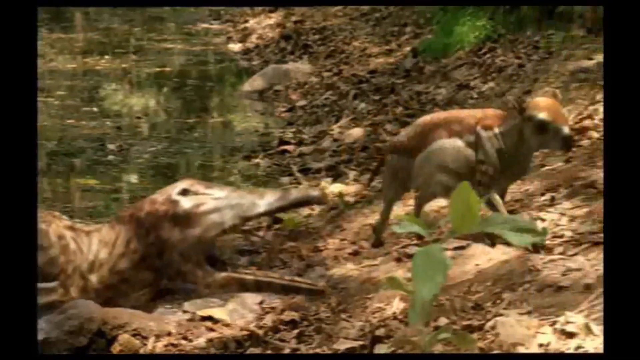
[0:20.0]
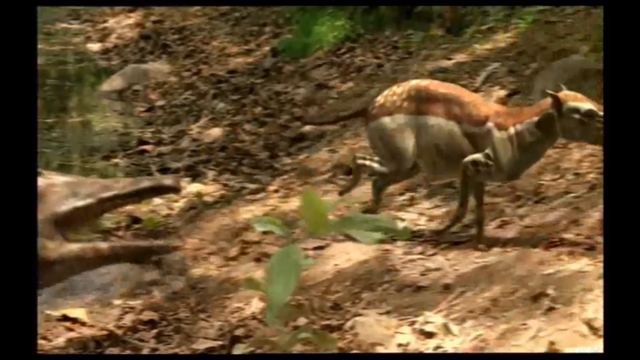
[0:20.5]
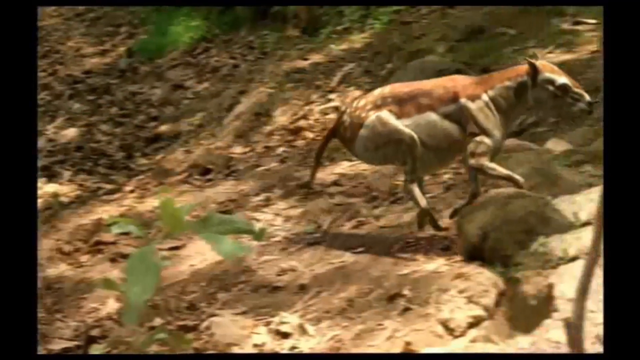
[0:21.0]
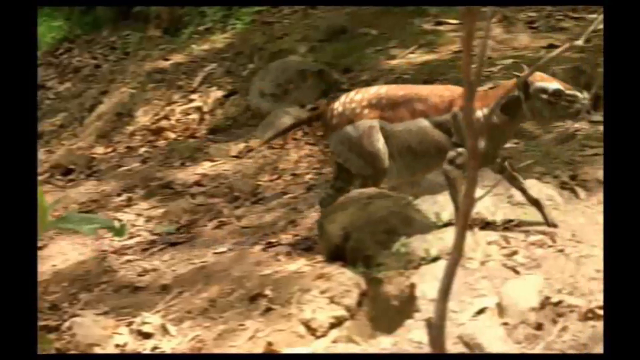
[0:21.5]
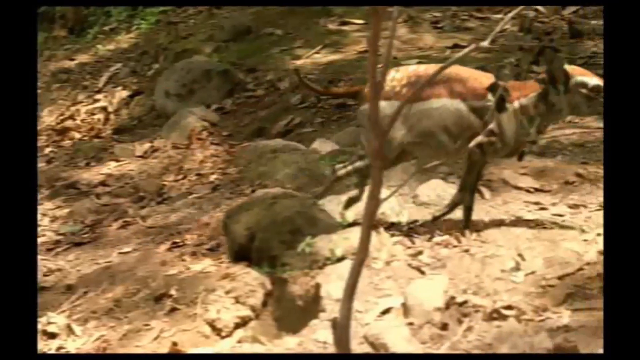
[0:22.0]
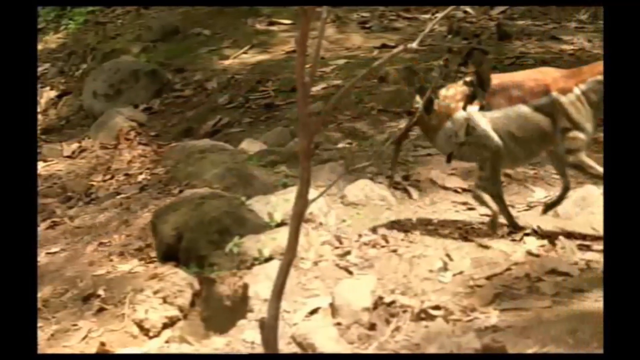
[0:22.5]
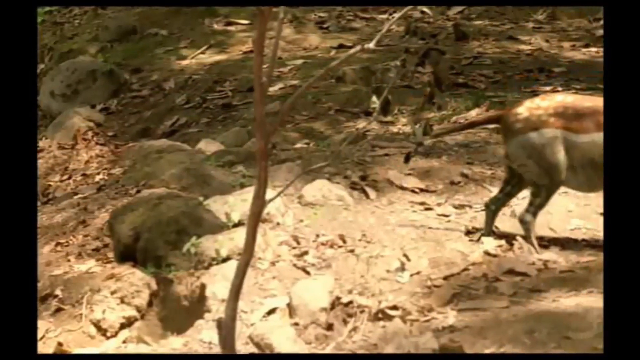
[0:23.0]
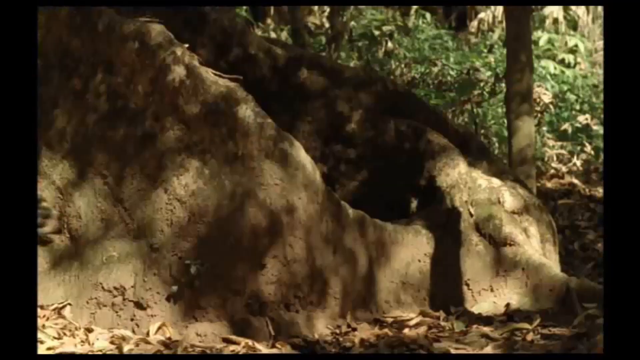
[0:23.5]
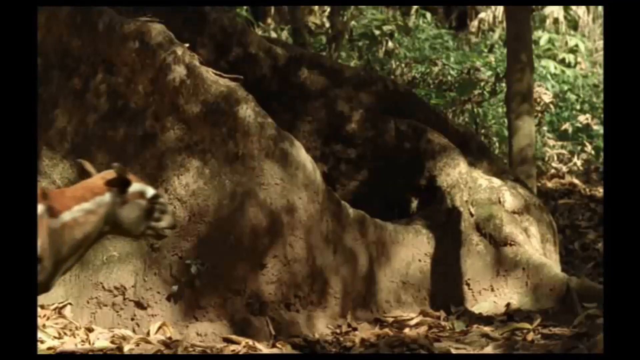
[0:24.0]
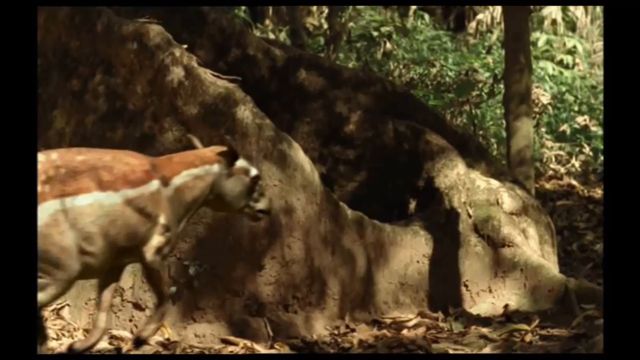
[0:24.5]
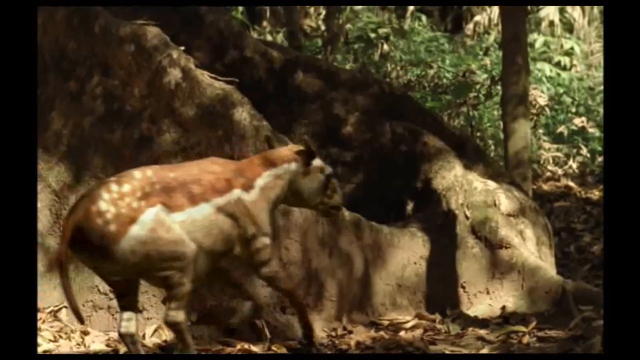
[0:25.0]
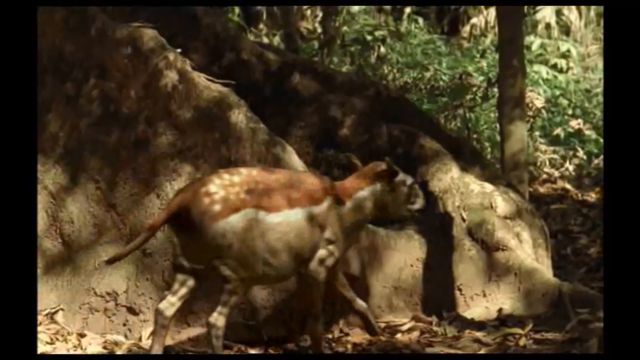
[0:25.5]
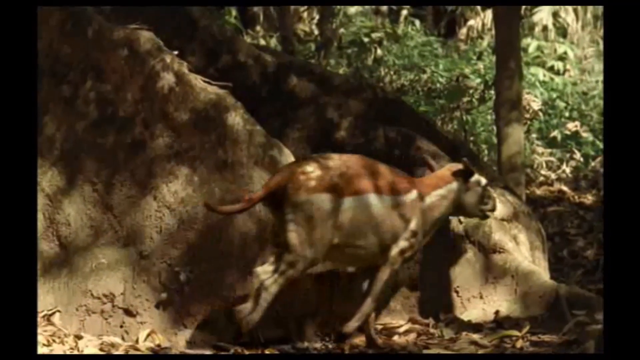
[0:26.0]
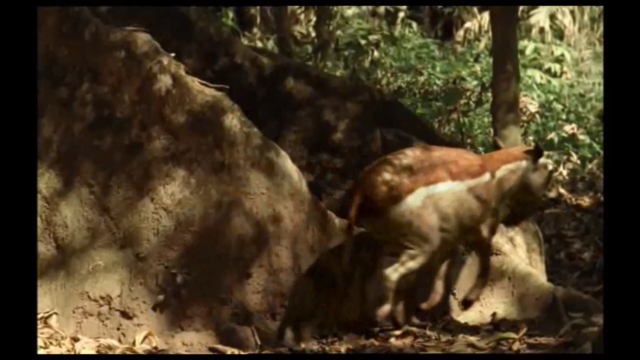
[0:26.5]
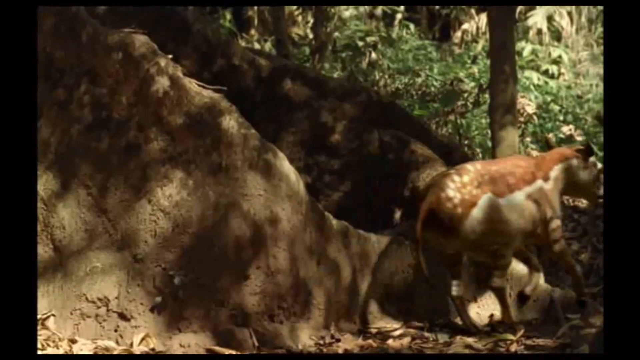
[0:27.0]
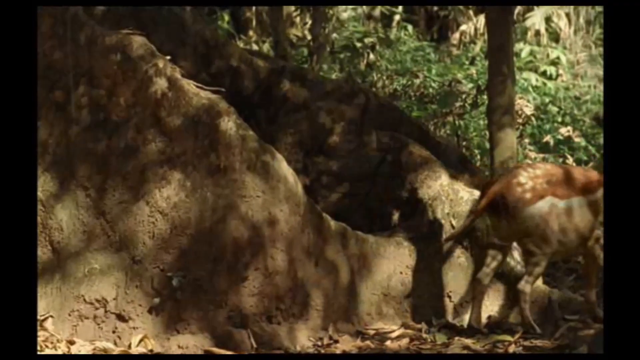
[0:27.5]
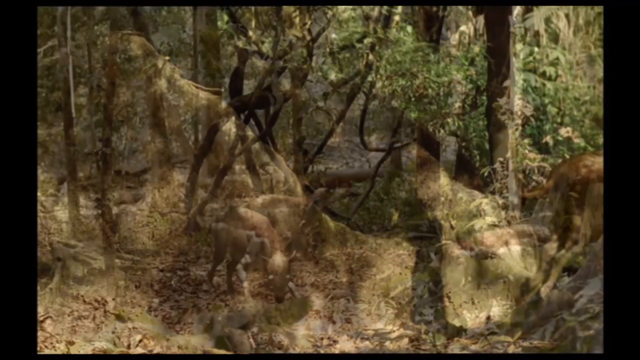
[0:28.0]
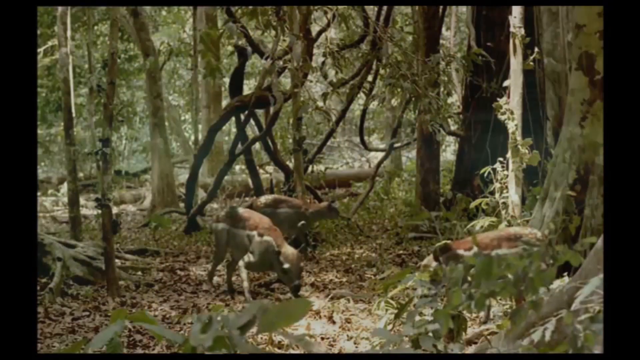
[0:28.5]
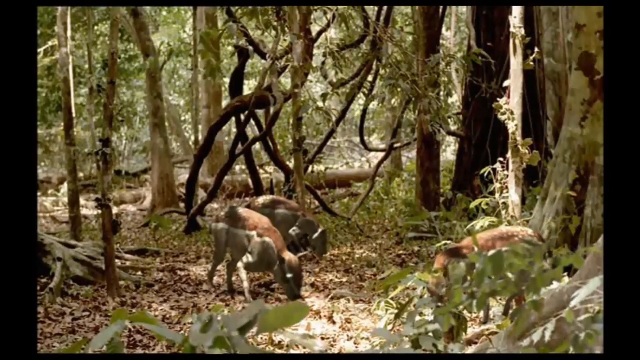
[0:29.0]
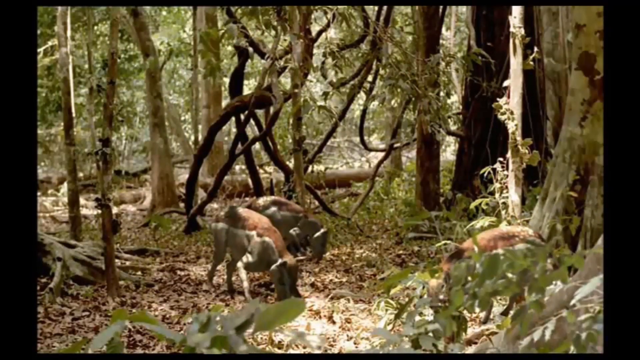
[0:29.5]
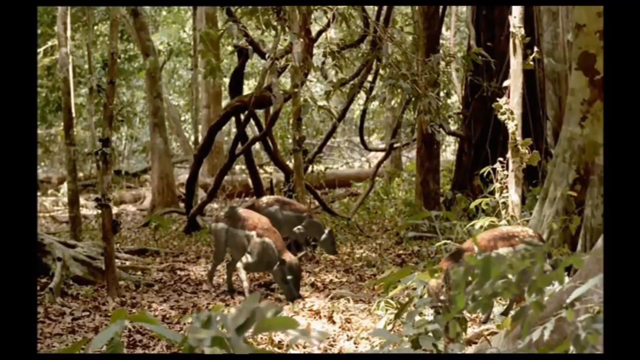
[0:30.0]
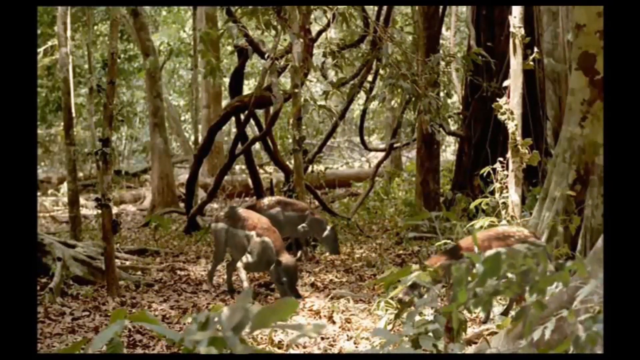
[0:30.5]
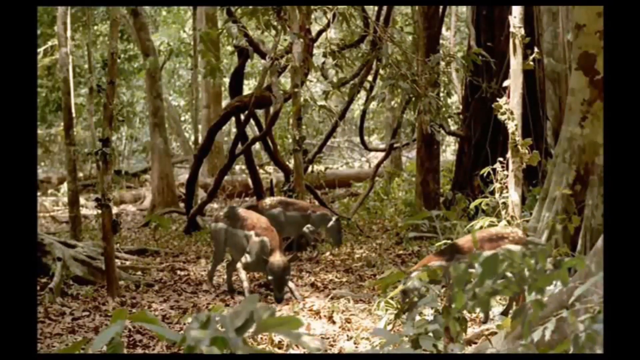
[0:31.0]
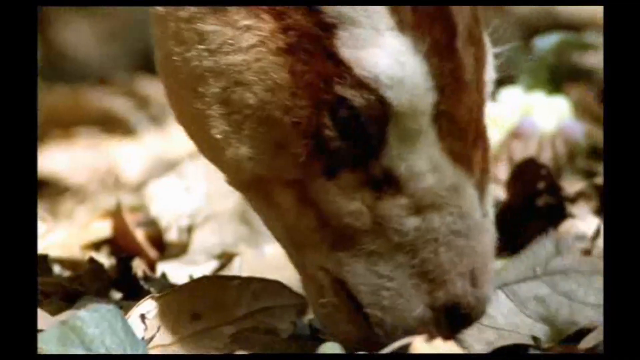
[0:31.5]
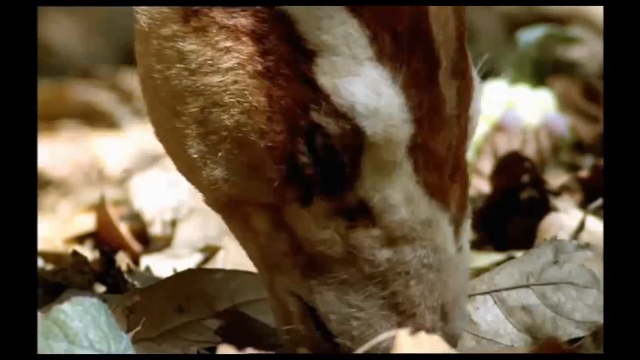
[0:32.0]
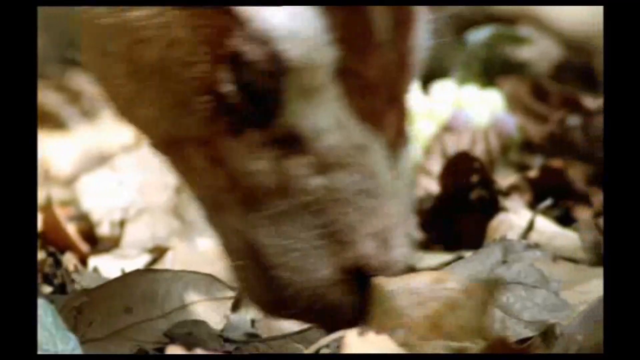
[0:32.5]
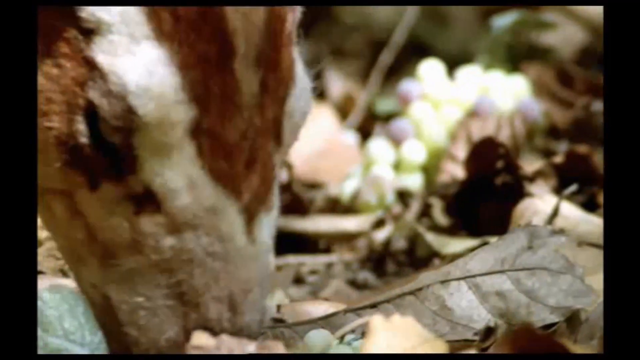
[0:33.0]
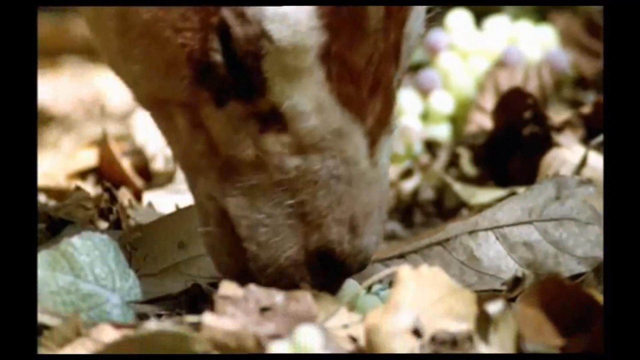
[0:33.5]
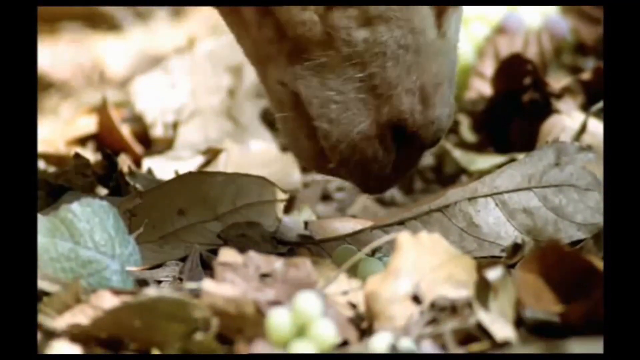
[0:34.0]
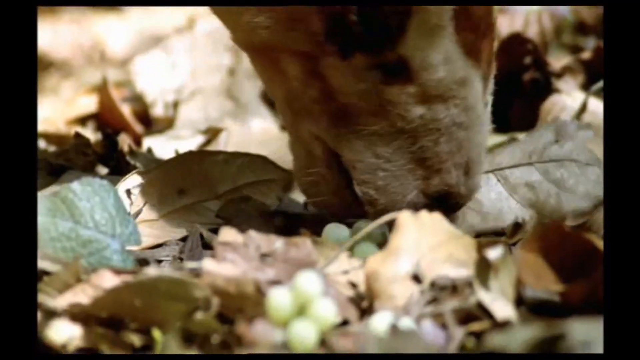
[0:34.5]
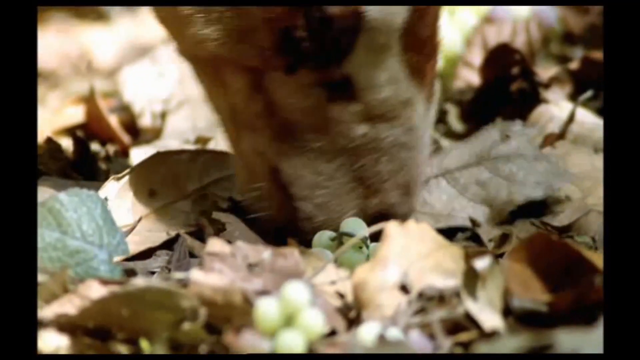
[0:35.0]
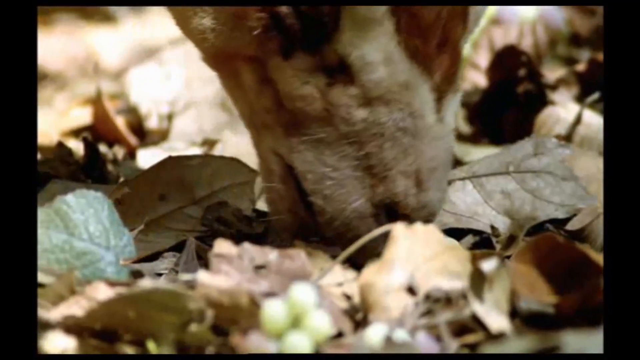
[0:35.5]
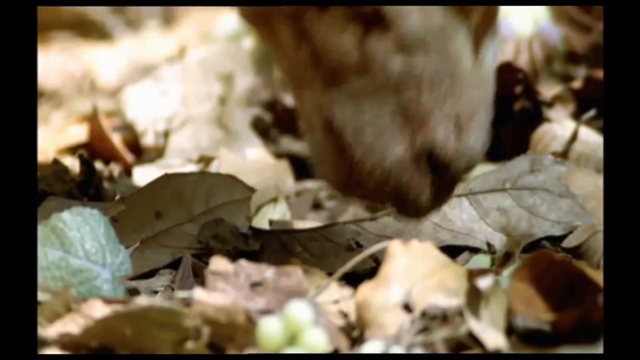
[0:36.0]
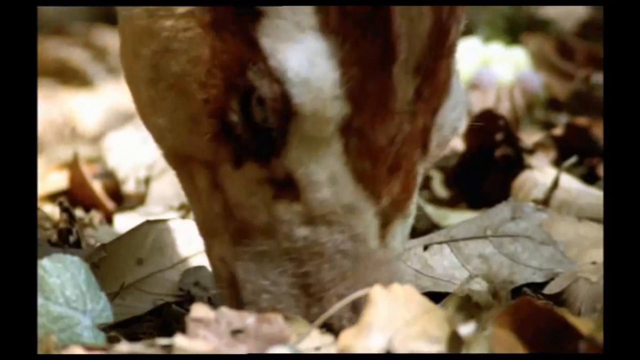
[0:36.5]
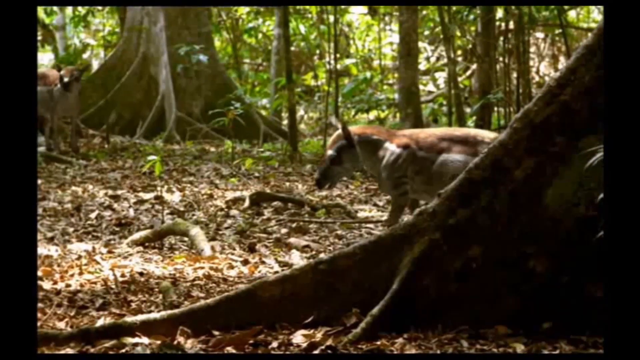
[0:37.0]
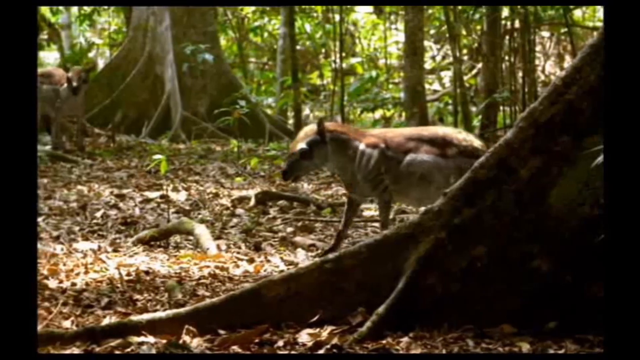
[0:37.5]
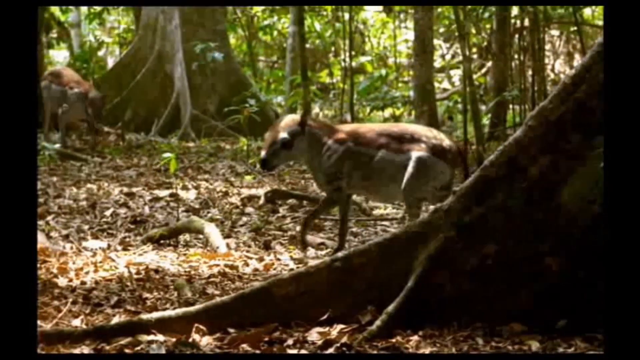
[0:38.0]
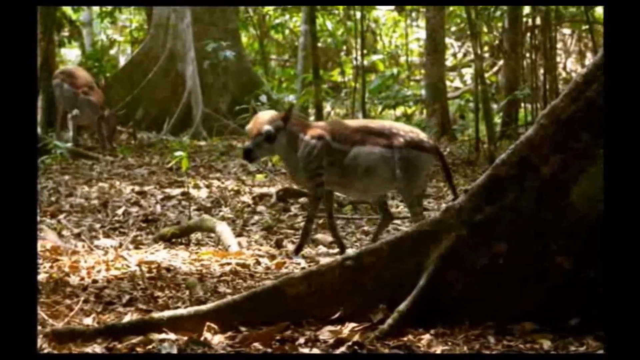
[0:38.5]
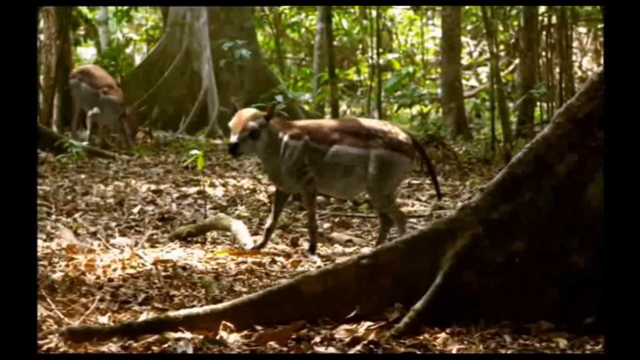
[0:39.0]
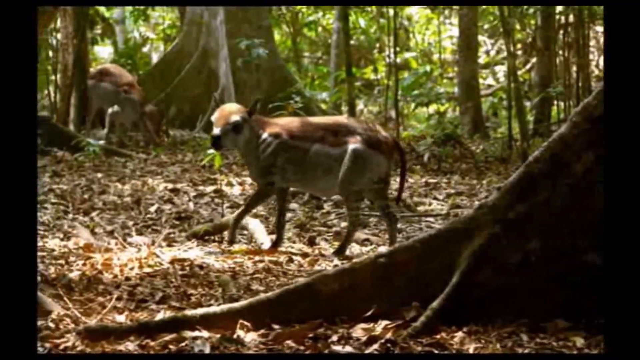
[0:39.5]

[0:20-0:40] The dinosaur-looking animal closes its mouth as the buck runs away from the riverbank, and the camera shows the animal leaping along the path through the riverbank. The camera then shows this type of animal with other animals of a similar kind inside the forest, foraging on the ground for food. Another animal of this size walks about within the forest alongside two other bucks. The trees in the forest are not green, and some leaves have fallen on the ground and dried up. The animal uses its mouth to search the ground and pick up some food. A young animal then appears with one more in the background, and a greener side of the forest is shown, with the camera partially obscured by a big root of a tree.